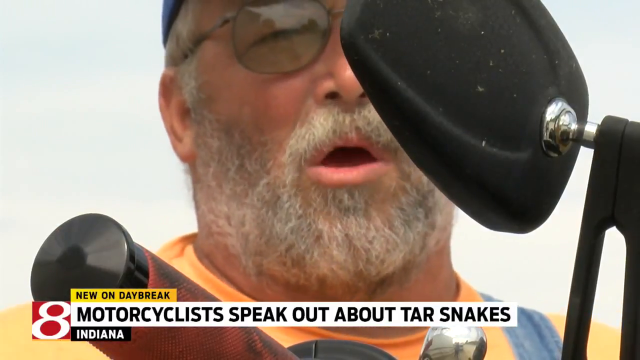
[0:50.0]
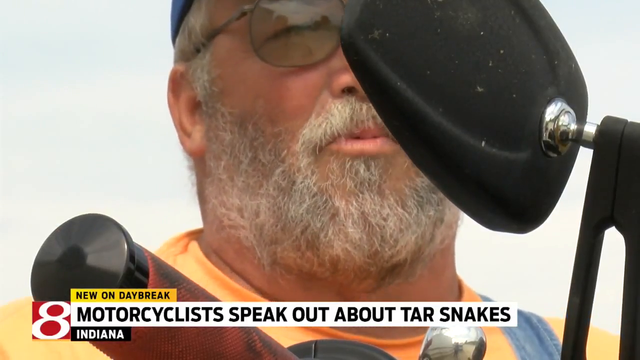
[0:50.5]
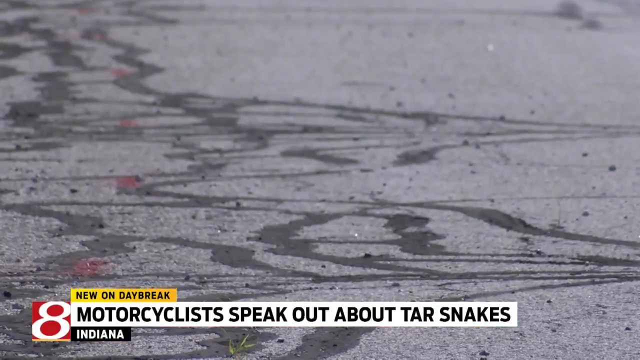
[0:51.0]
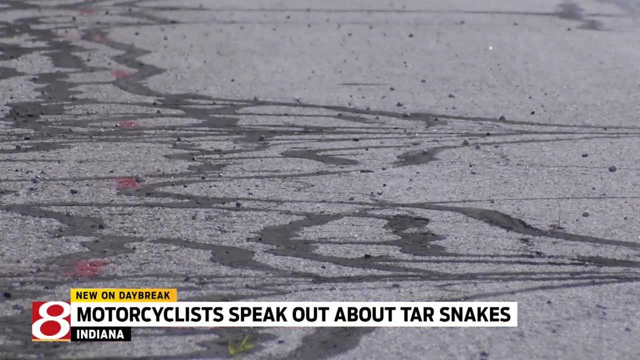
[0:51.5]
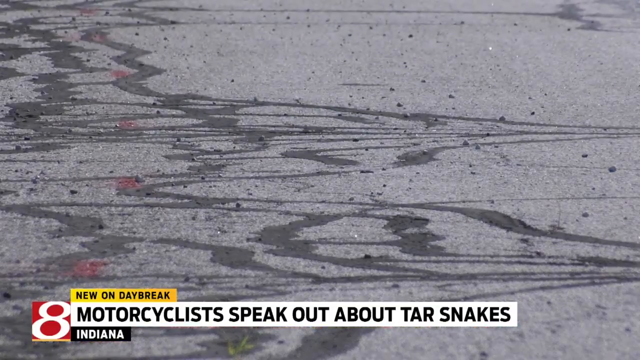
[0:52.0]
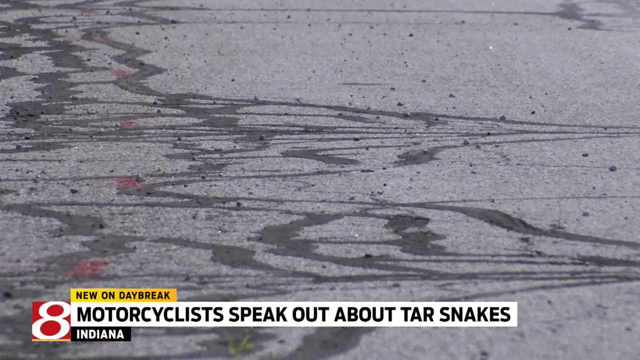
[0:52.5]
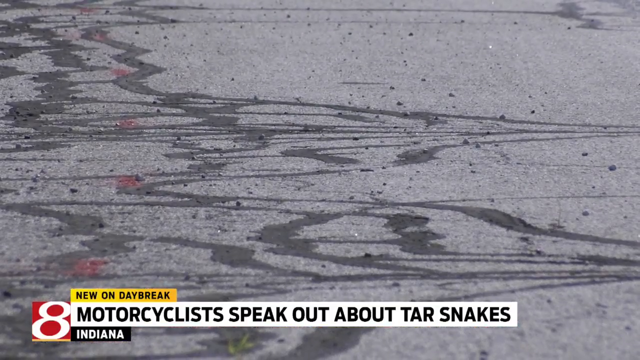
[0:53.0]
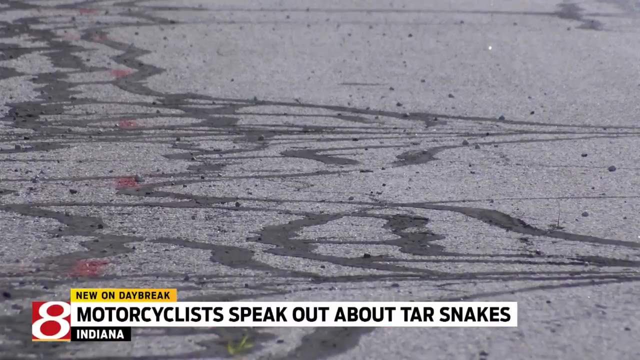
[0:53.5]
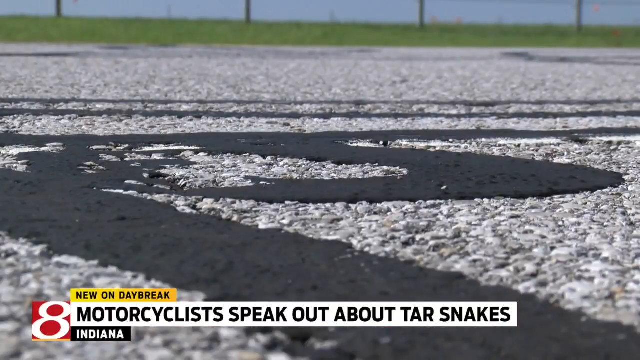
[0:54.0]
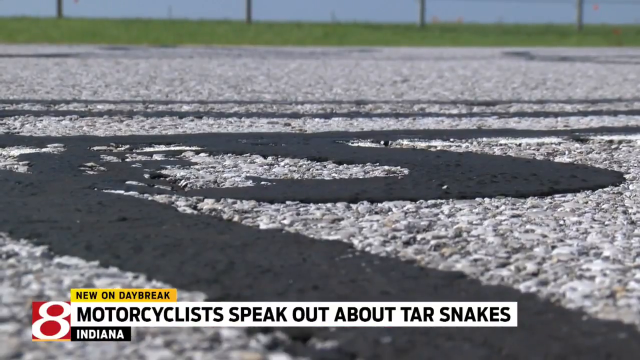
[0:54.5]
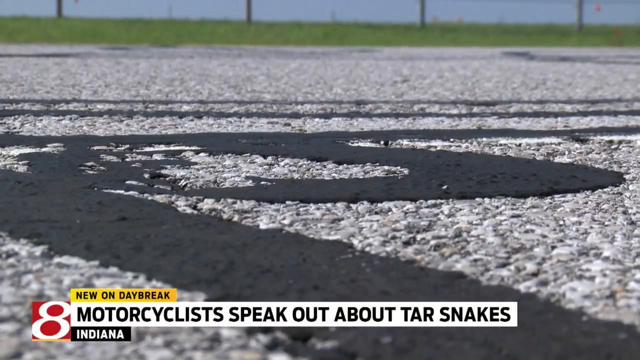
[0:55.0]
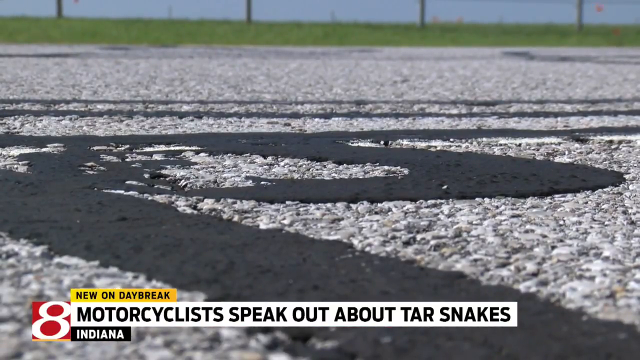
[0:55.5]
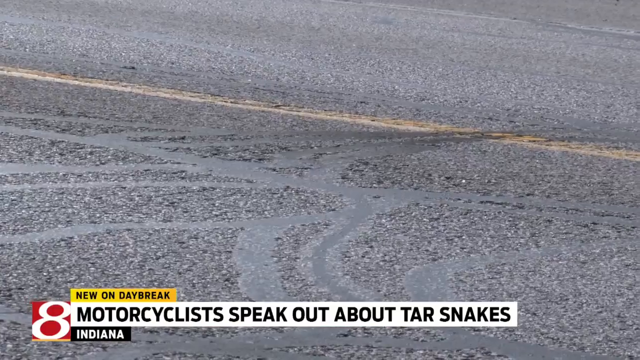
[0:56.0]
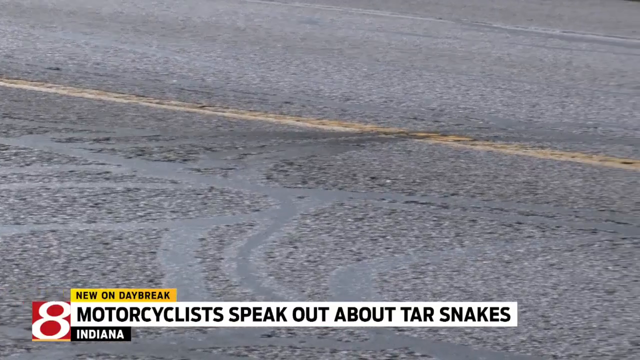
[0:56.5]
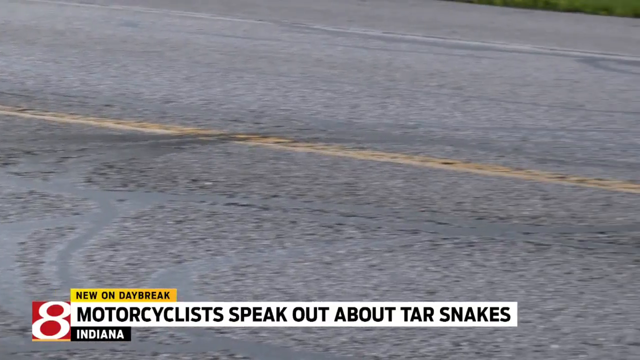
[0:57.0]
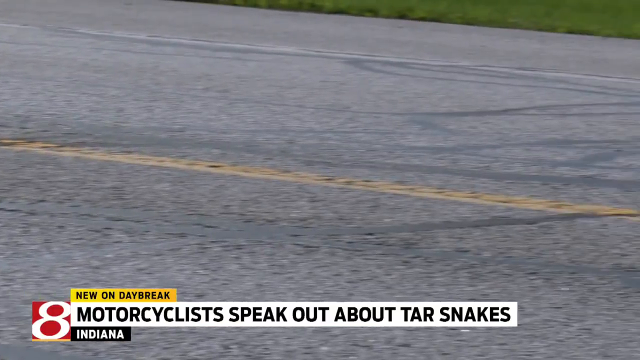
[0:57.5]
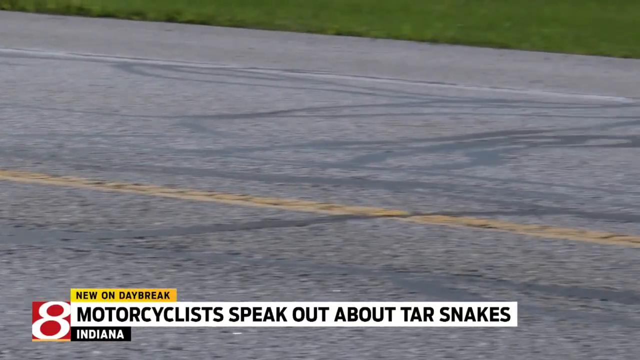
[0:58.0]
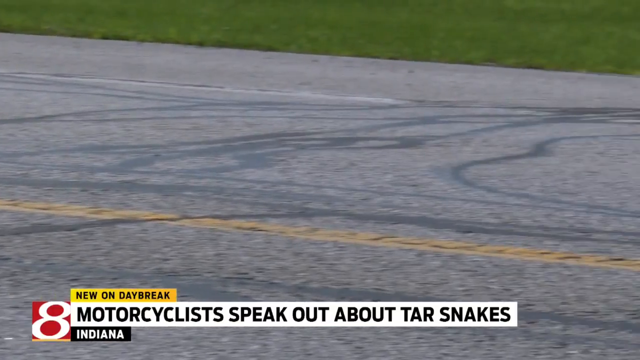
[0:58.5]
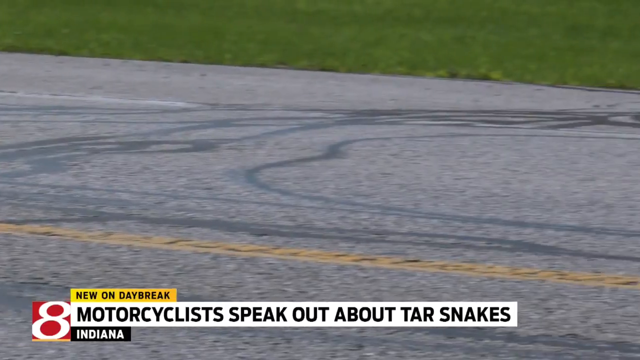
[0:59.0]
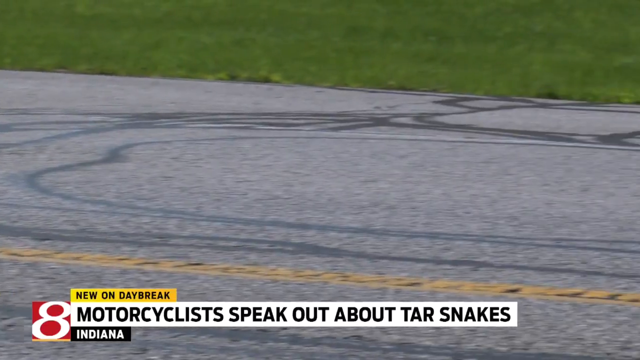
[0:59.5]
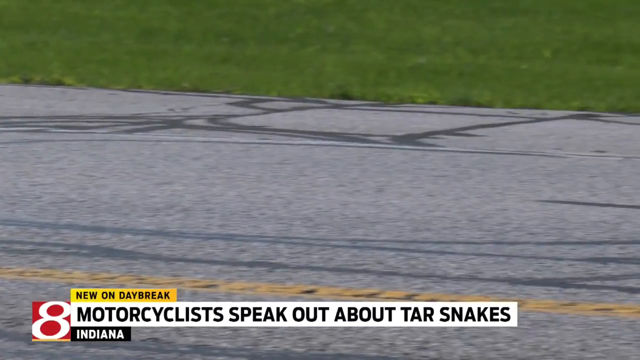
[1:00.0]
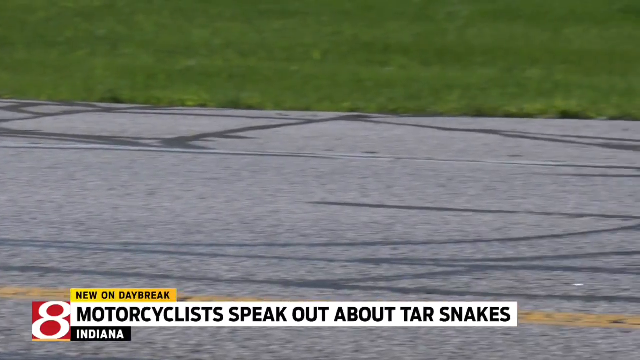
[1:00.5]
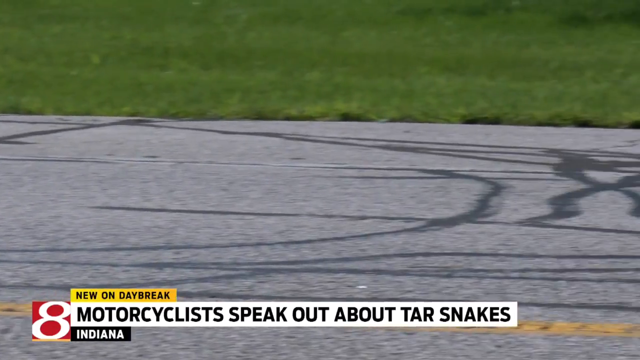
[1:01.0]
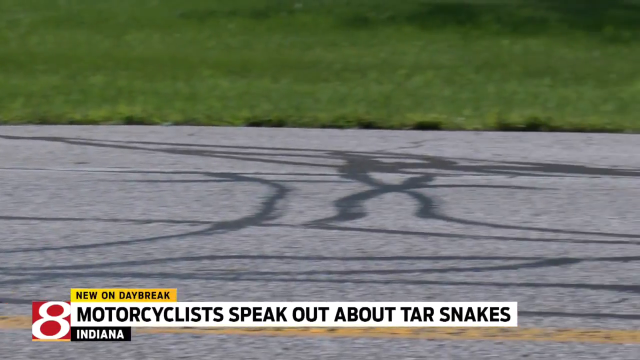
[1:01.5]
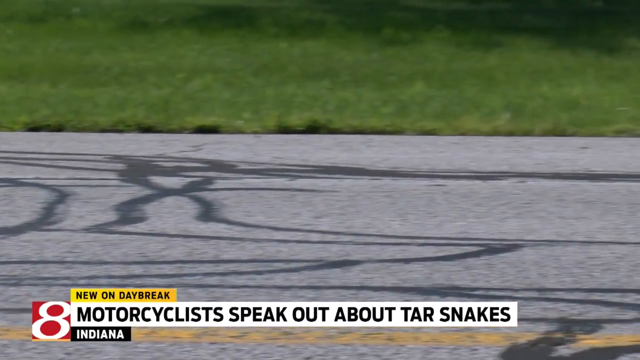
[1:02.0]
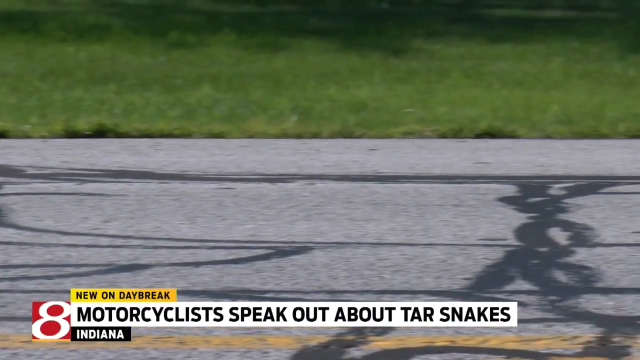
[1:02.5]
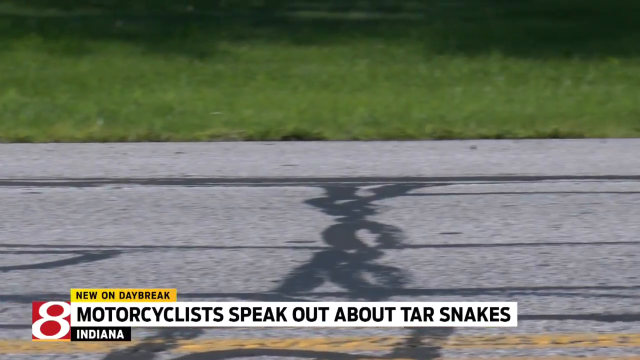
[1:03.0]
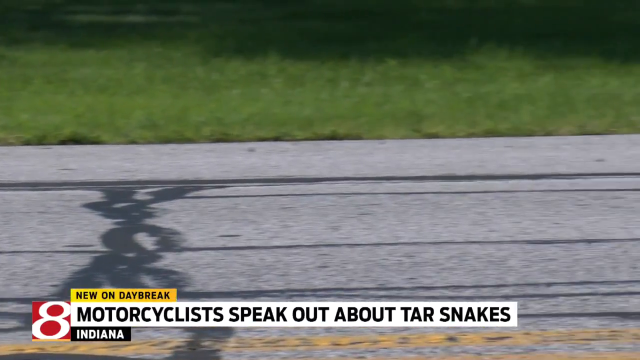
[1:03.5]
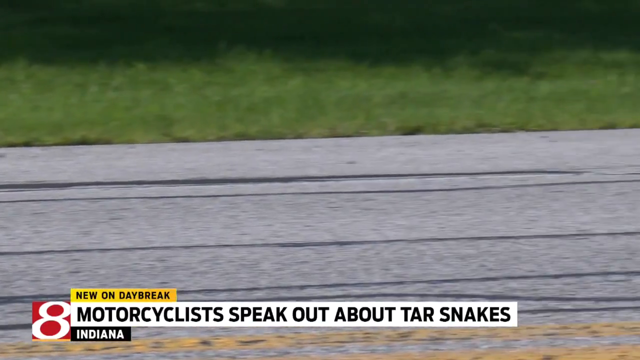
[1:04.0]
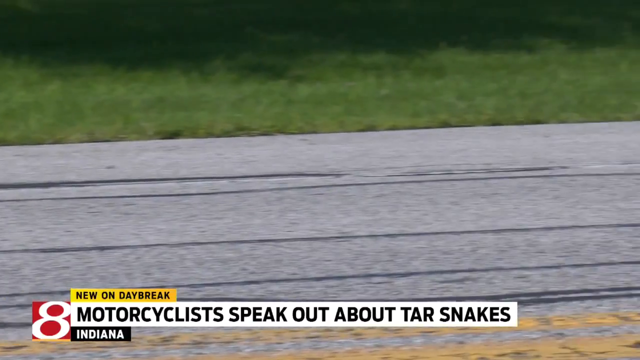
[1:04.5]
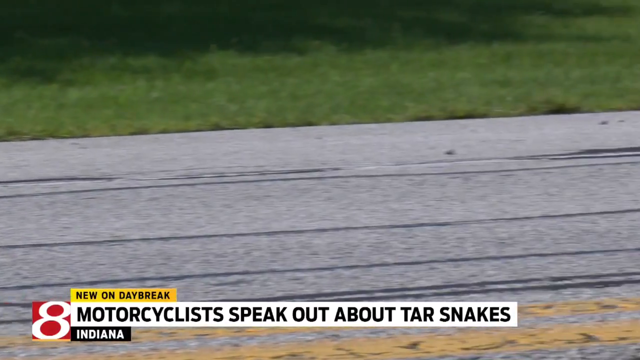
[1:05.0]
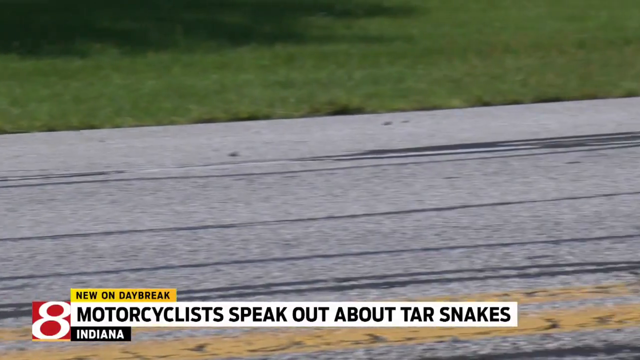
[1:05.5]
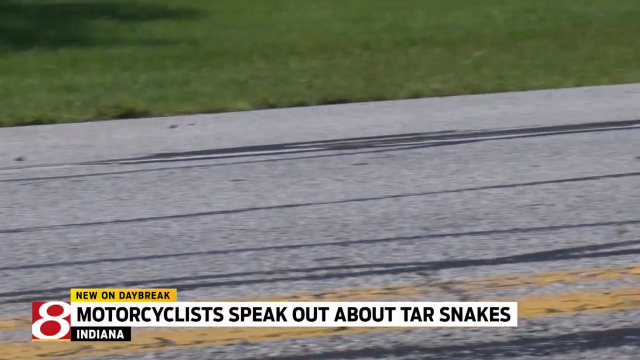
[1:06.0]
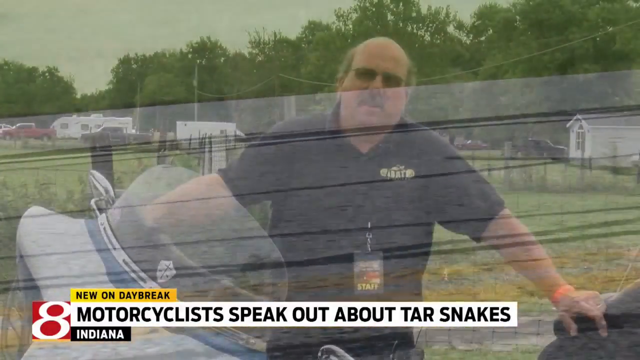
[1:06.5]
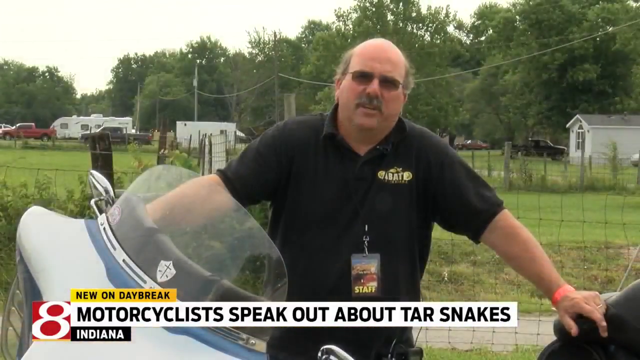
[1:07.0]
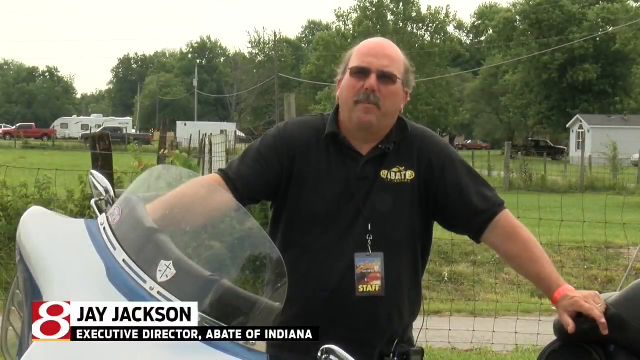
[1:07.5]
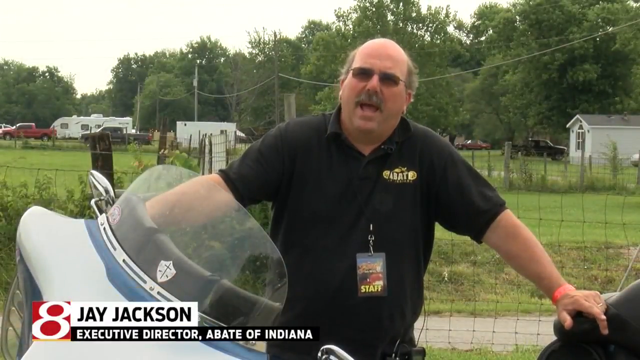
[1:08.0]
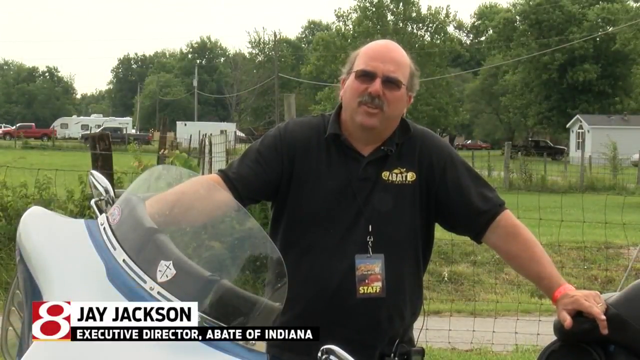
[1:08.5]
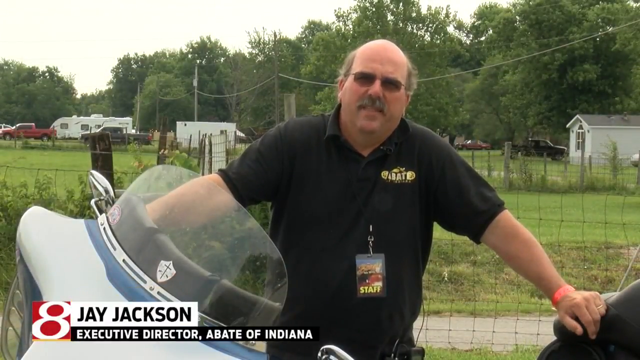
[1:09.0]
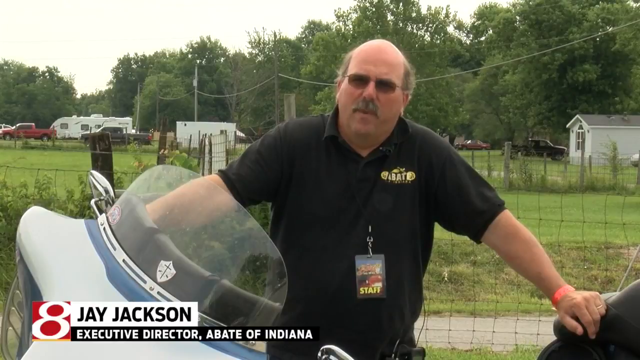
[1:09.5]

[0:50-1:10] The Channel 8 on-location report continues with the text "new on daybreak, motorcyclists speak out about tar snakes," in Indiana. The interviewee is an older man, probably in his mid to late 60s, wearing a blue cap. A very close close-up shows a street with tar on it at various locations; the tar is all over the street in different places, apparently something the motorcyclists do not like. Next is a man named Jay Jackson, executive director of Abate of Indiana. He has a staff credential and a black Abate shirt with gold letters and a motorcycle on it. He is bald, in his mid to late 50s, and speaks to the camera, apparently about the tar snakes.